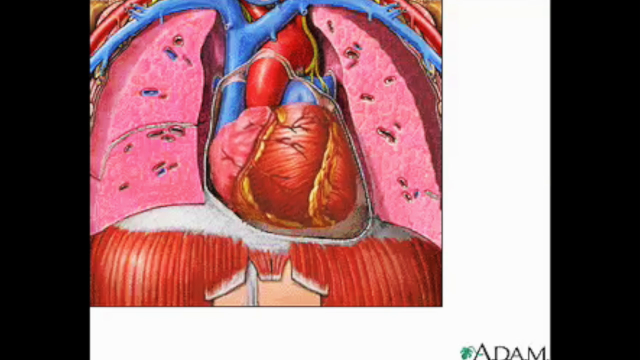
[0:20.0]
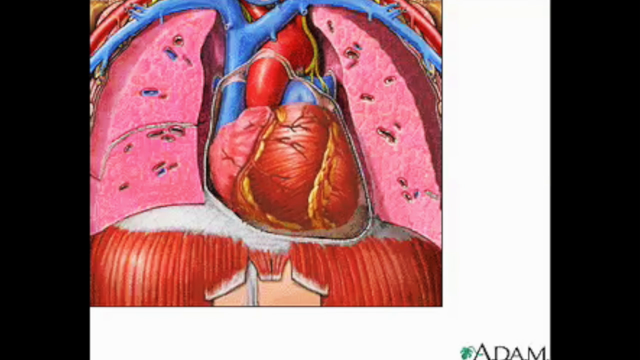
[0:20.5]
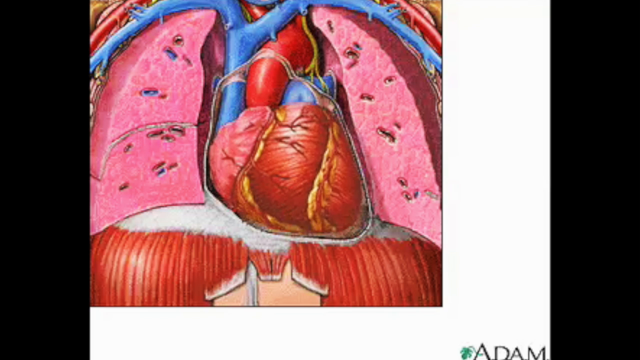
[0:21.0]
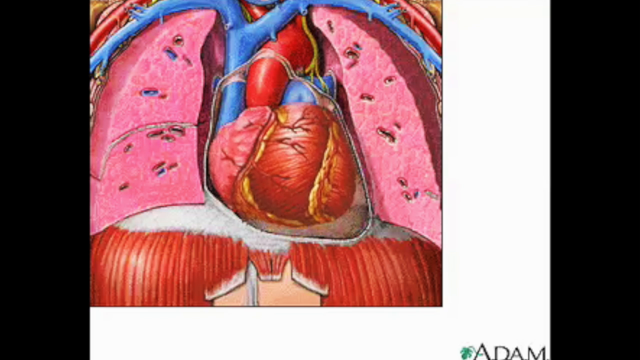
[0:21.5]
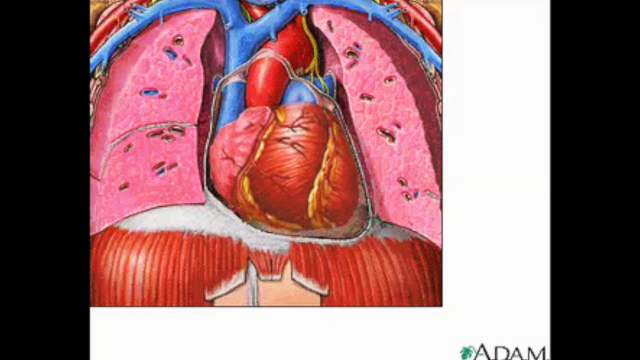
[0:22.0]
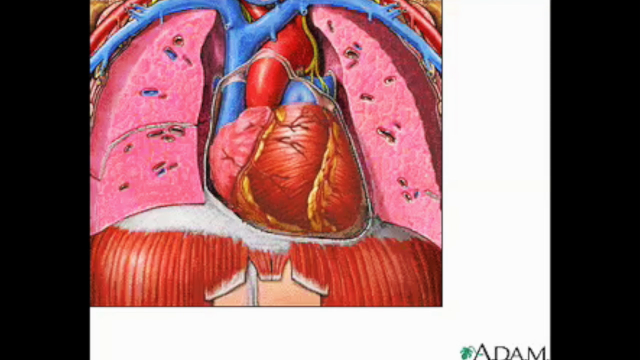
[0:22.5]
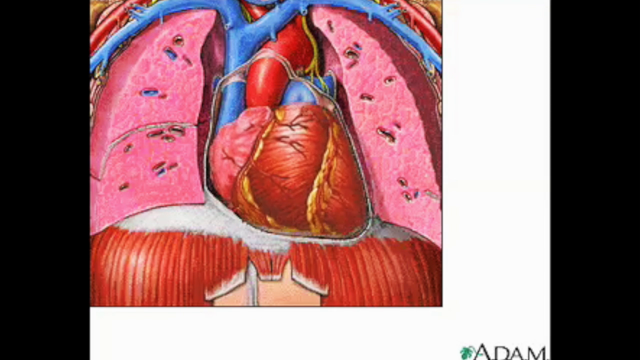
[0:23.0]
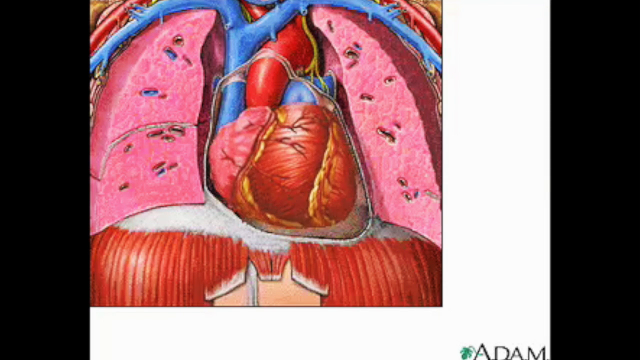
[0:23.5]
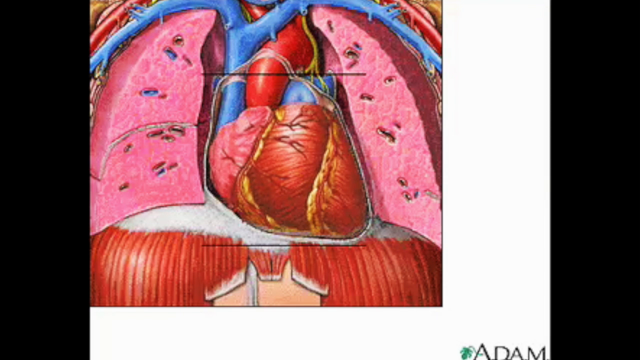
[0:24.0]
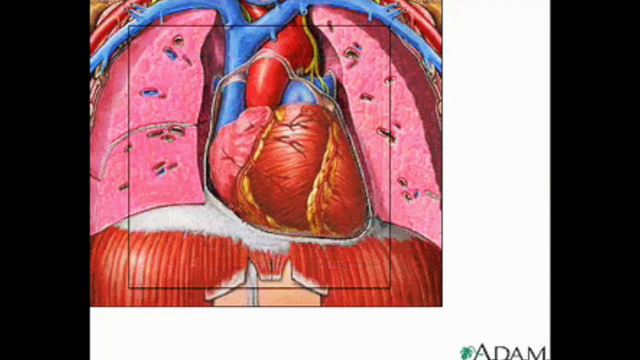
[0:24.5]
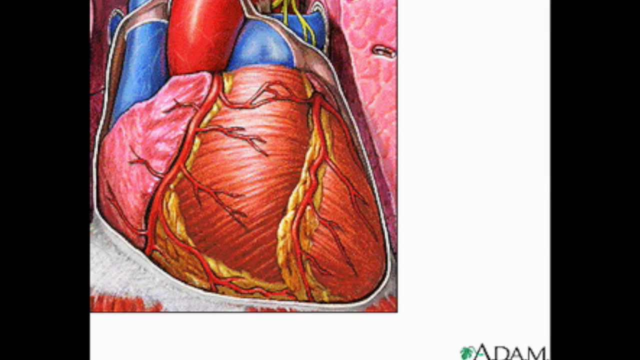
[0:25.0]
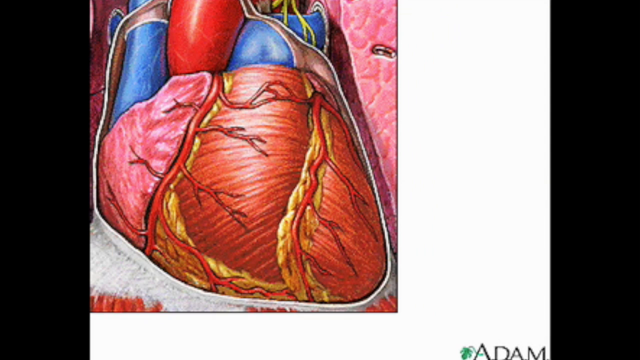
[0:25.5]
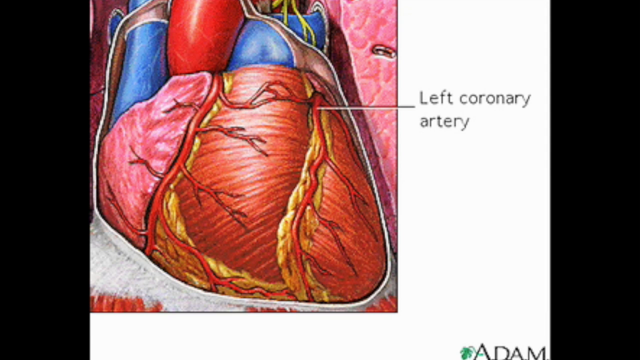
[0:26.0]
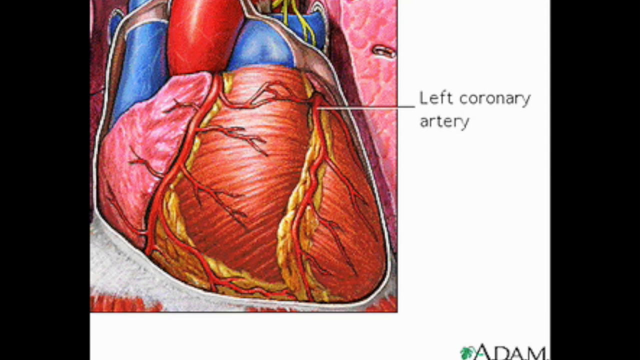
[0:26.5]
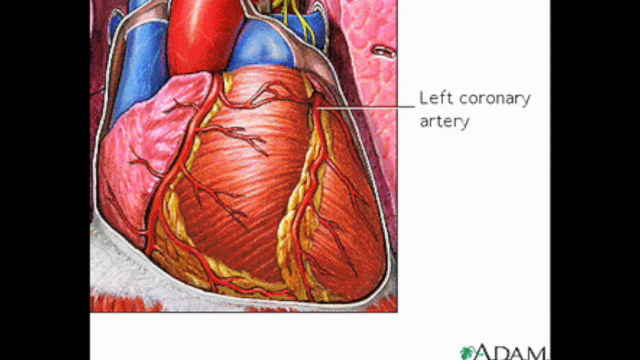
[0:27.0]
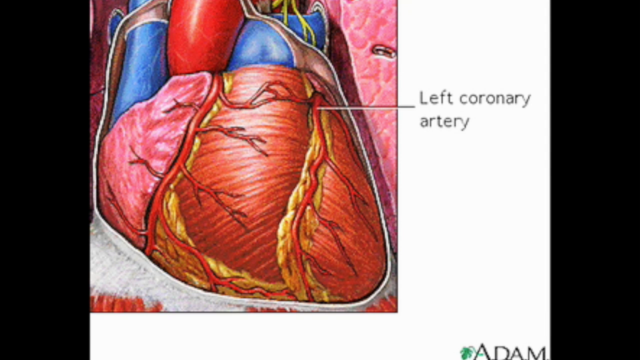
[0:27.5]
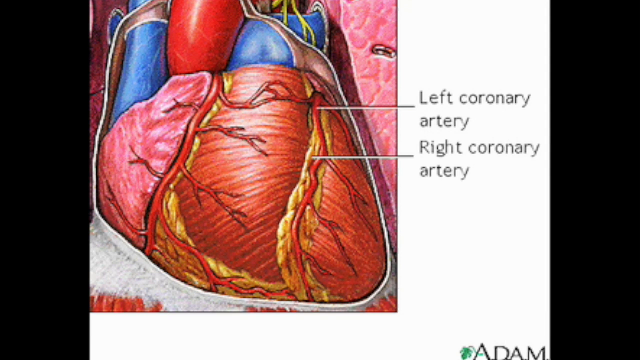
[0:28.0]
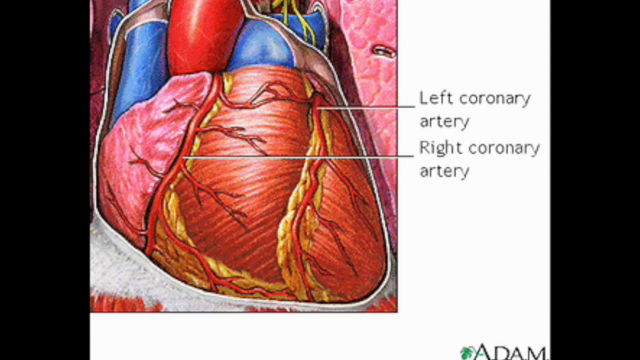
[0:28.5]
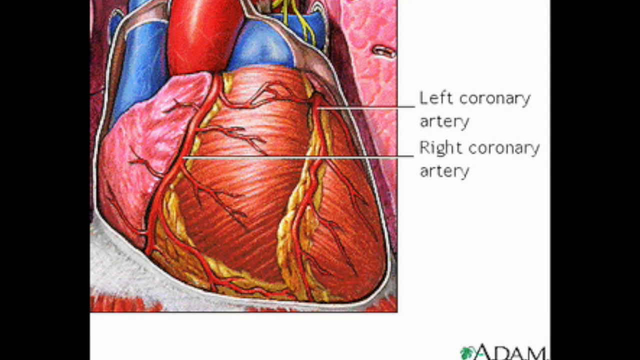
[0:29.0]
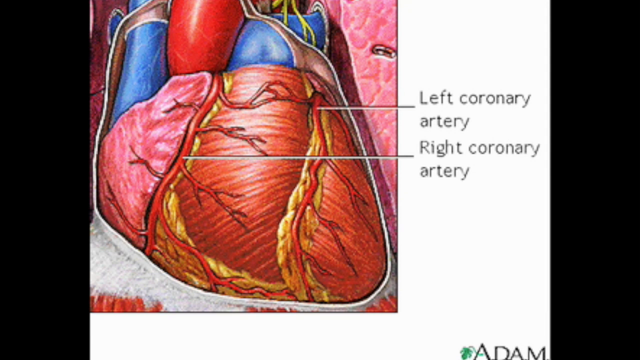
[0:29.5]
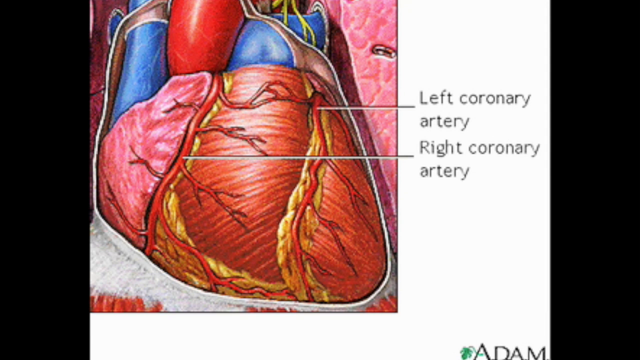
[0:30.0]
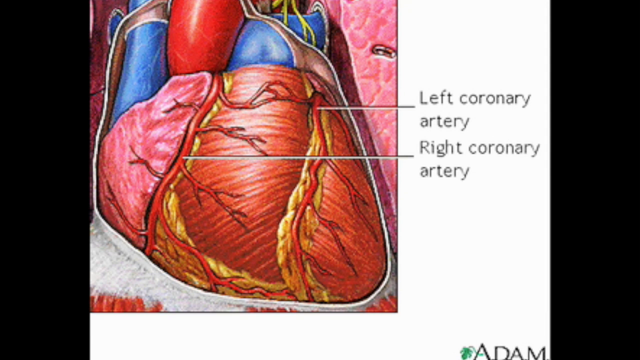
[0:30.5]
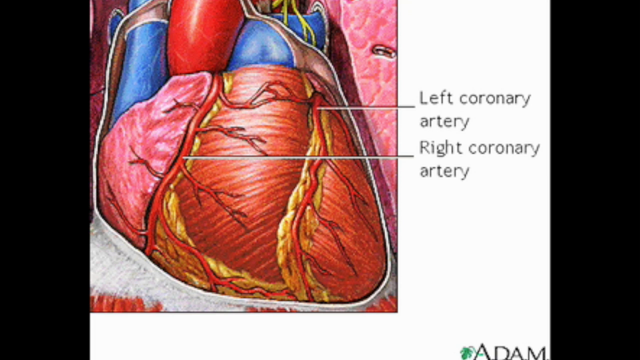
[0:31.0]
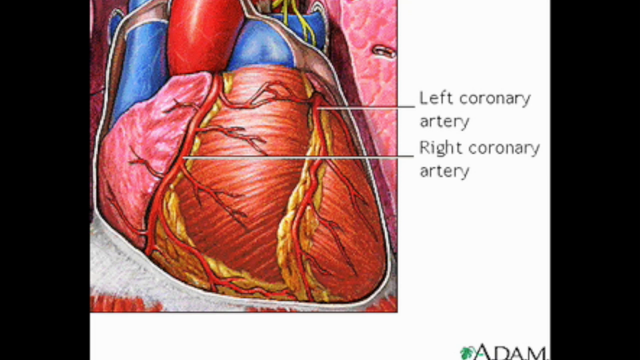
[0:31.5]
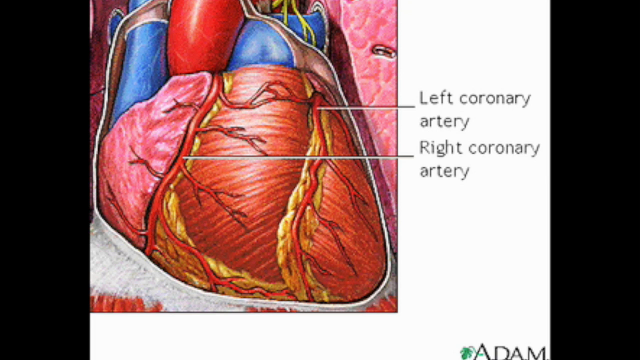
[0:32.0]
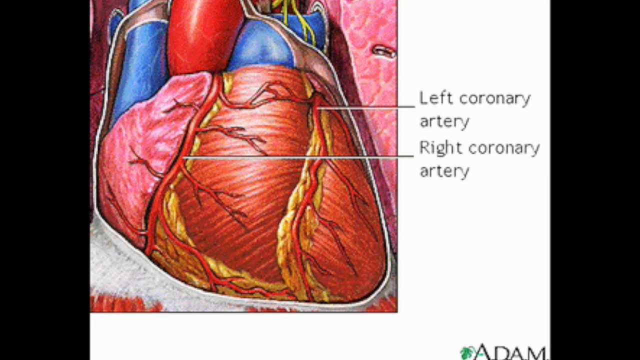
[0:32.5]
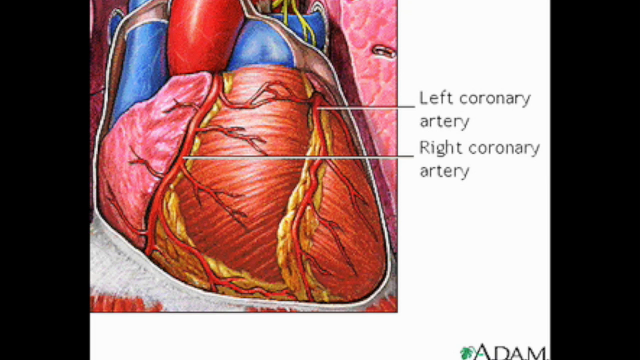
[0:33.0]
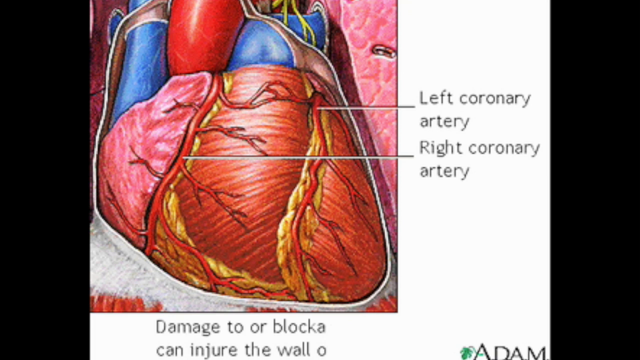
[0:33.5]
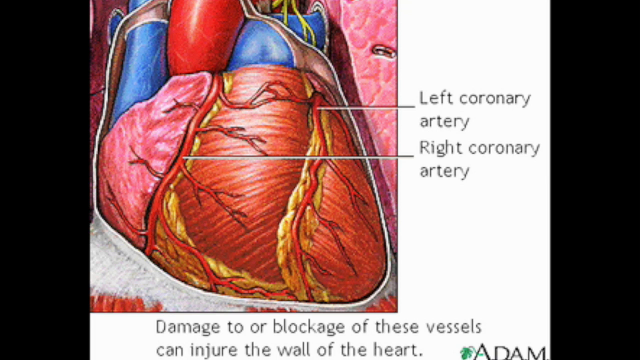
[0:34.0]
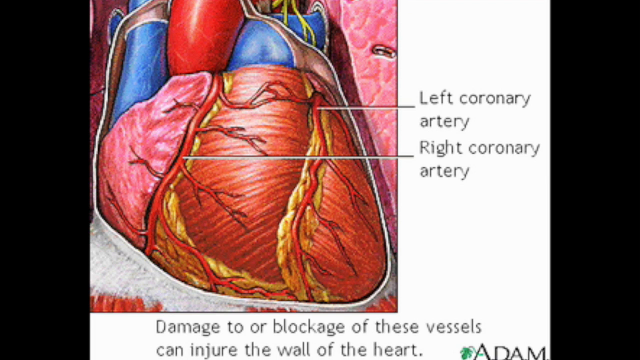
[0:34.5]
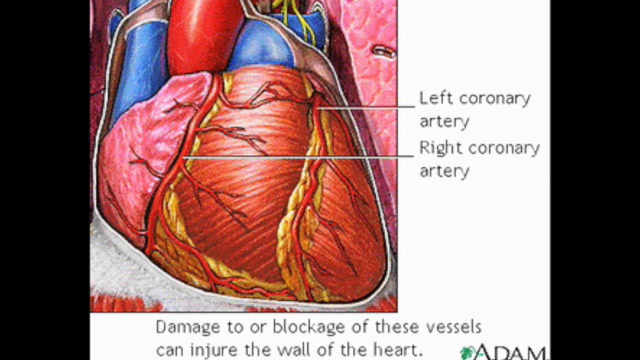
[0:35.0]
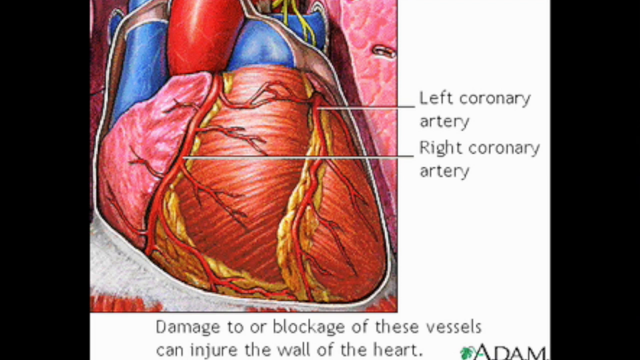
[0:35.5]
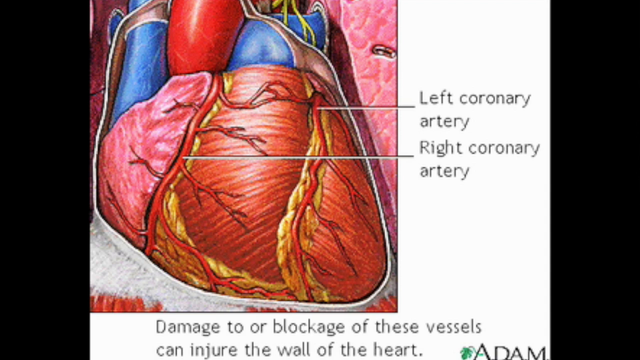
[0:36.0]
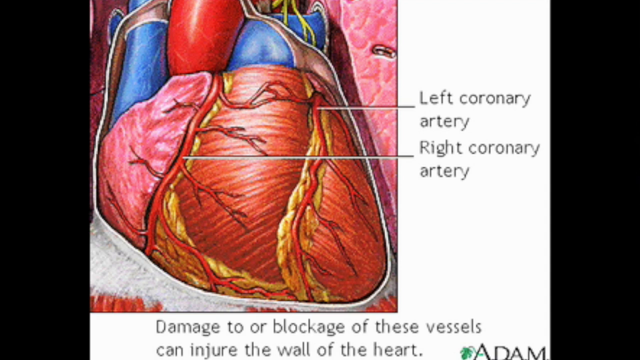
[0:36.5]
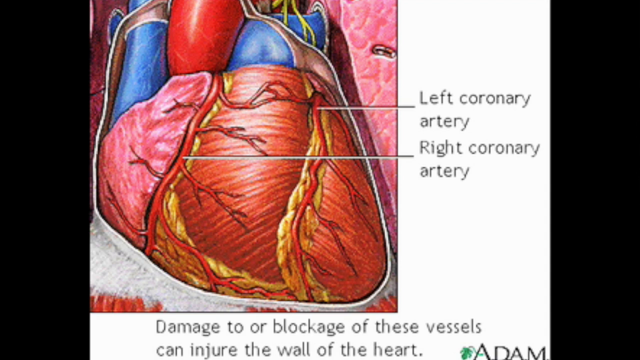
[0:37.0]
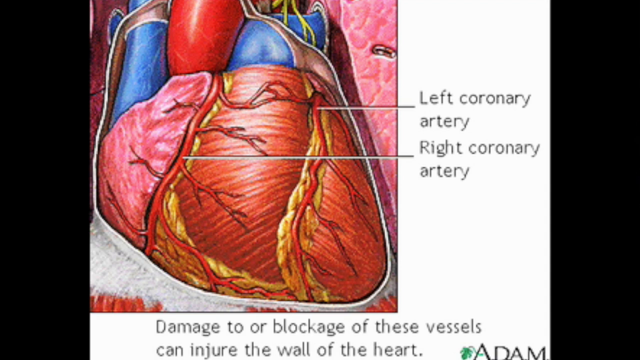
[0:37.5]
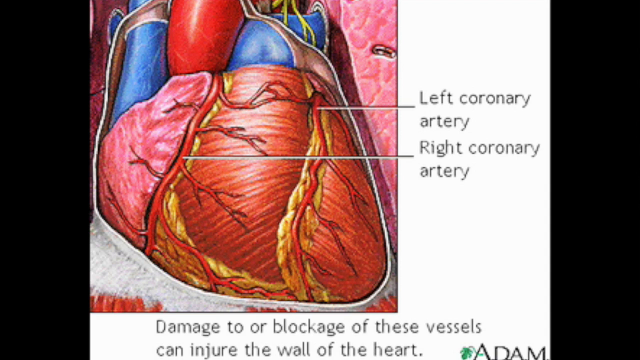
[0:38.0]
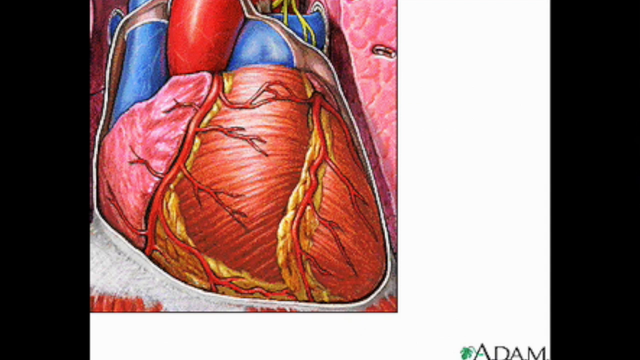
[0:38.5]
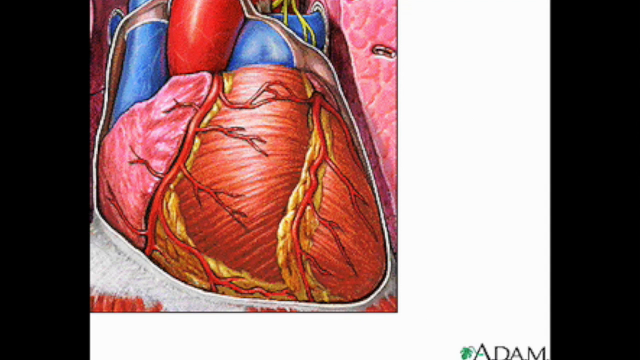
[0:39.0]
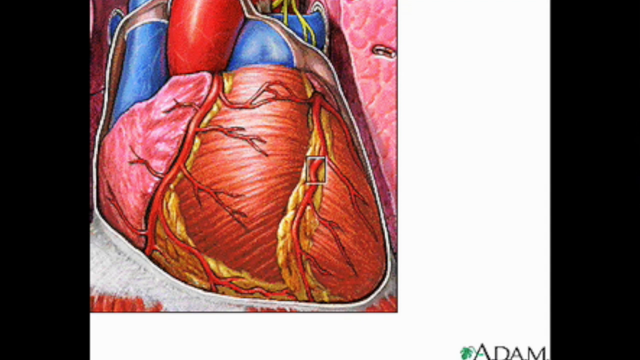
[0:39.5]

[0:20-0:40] A cutaway picture shows the heart, the lungs and the area around them. The heart beats, and two arteries run up and down on it, labeled as the left coronary artery and the right coronary artery. Black lettering below the animation reads "damage or blockage to either of these can damage the wall of the heart". Each artery has a number of branches off its main trunk, apparently supplying much of the heart with blood. For the first part, "Adam" is still in the bottom left-hand corner, but once the animation expands it is gone. The background is white with a shaded black bar at the bottom.